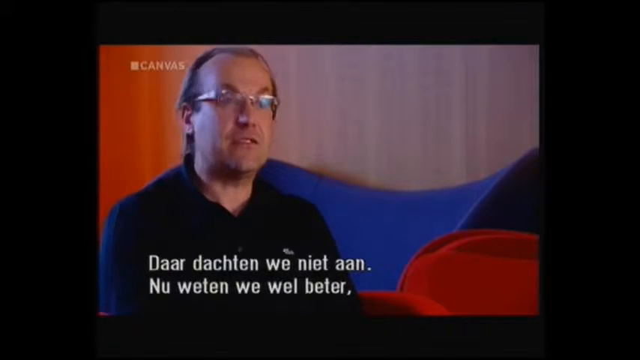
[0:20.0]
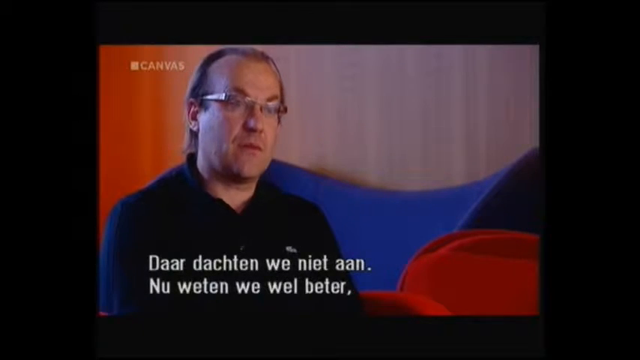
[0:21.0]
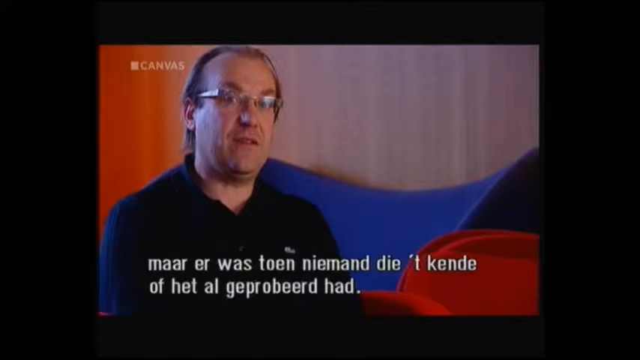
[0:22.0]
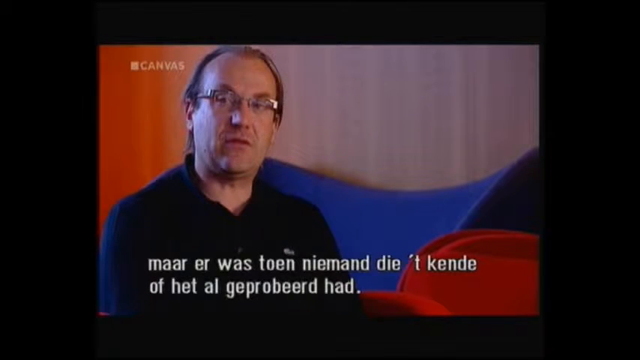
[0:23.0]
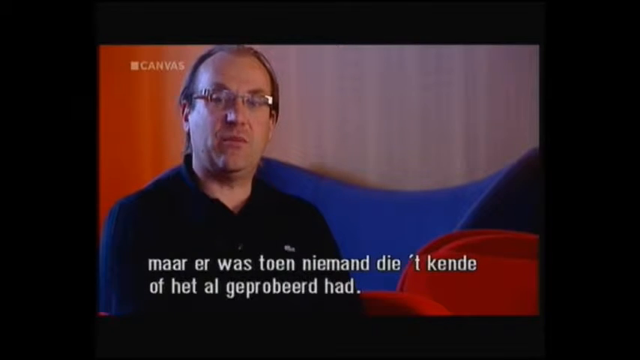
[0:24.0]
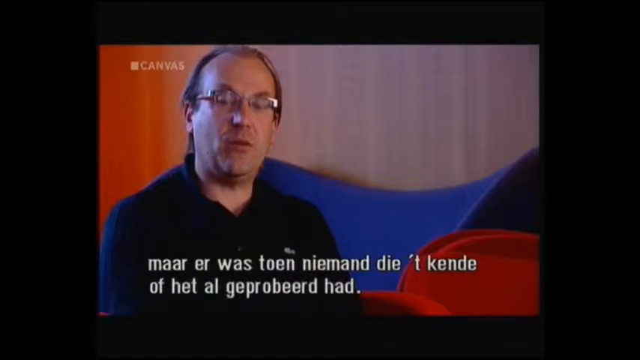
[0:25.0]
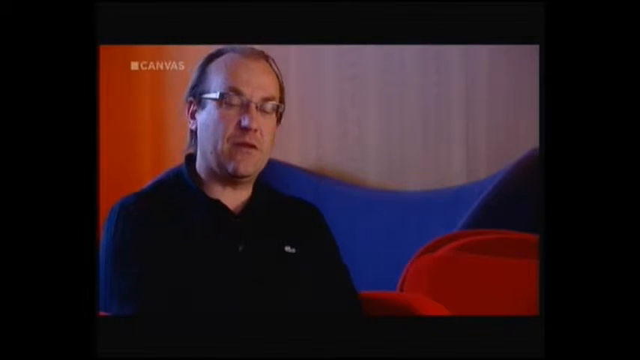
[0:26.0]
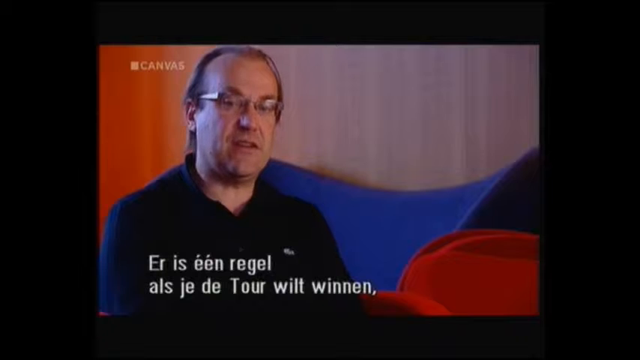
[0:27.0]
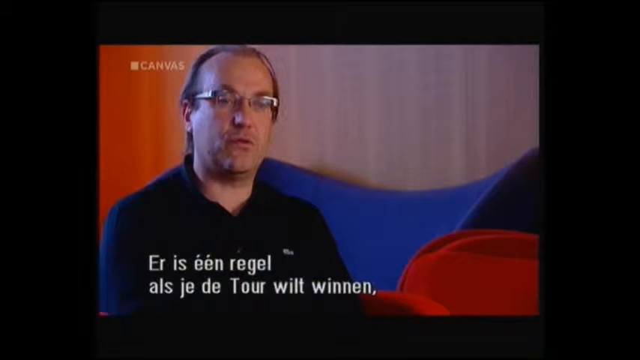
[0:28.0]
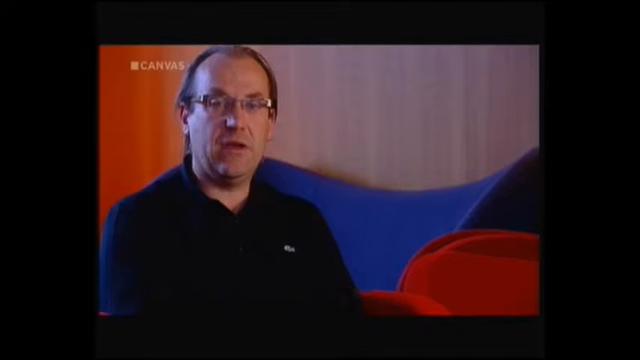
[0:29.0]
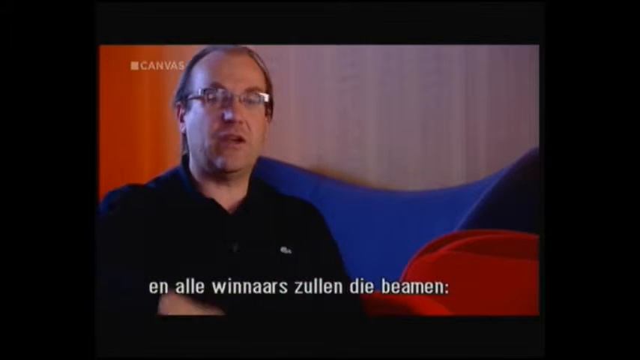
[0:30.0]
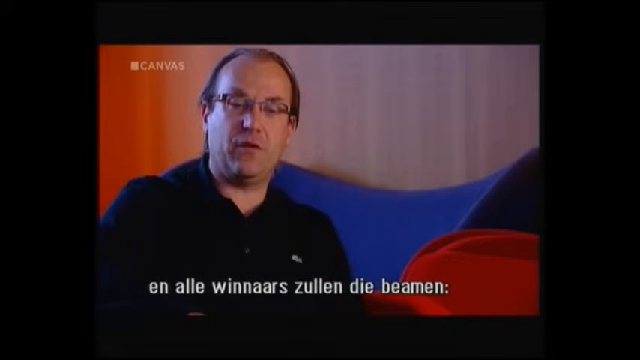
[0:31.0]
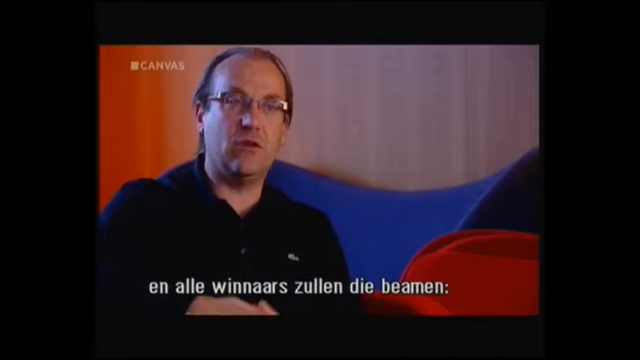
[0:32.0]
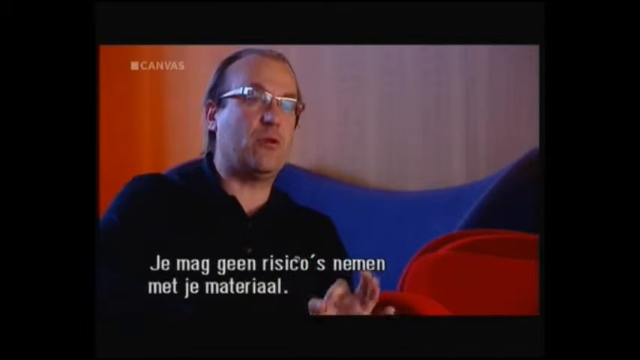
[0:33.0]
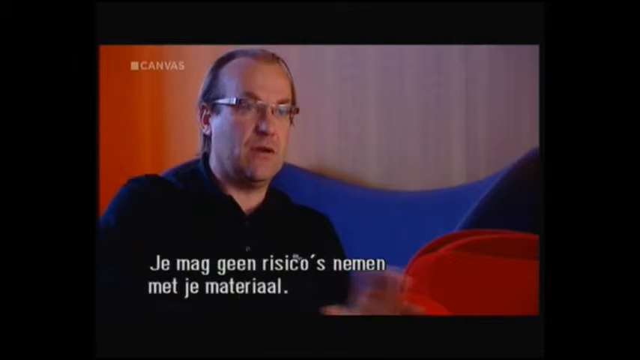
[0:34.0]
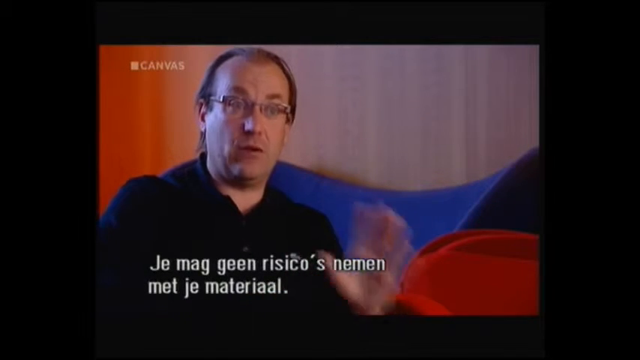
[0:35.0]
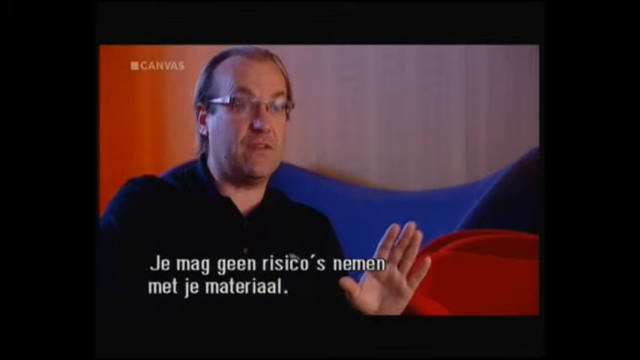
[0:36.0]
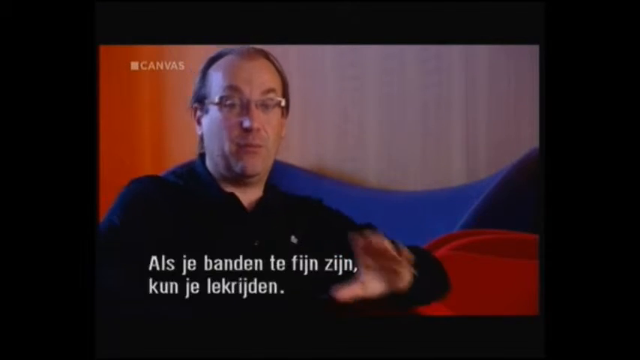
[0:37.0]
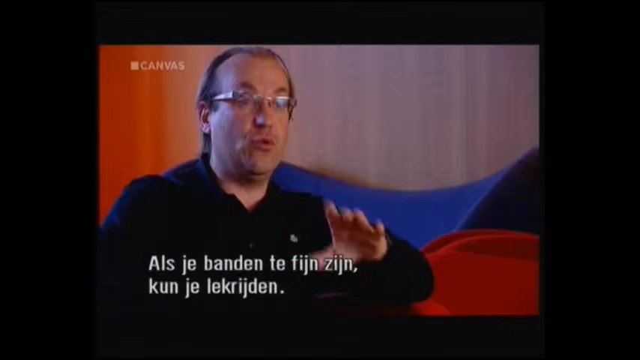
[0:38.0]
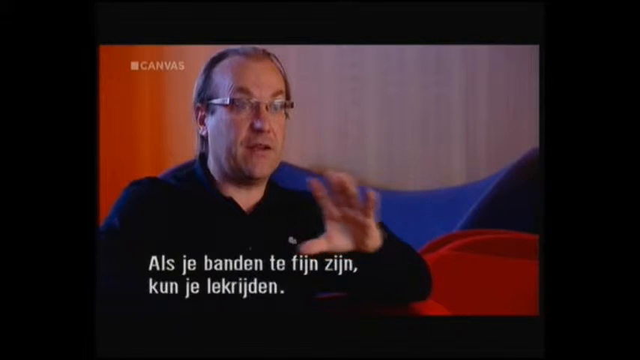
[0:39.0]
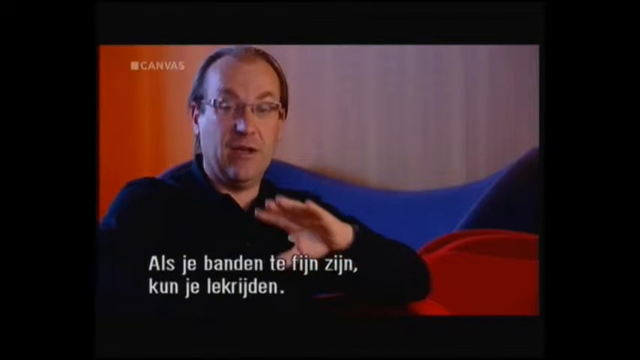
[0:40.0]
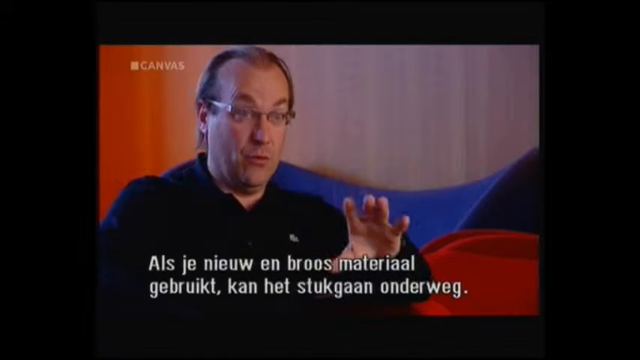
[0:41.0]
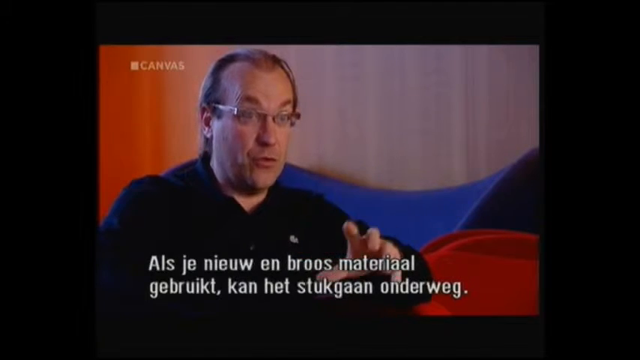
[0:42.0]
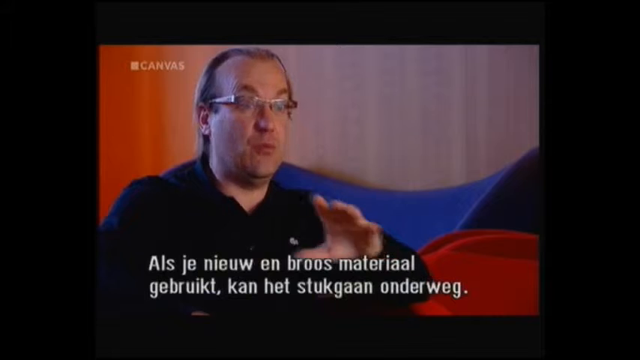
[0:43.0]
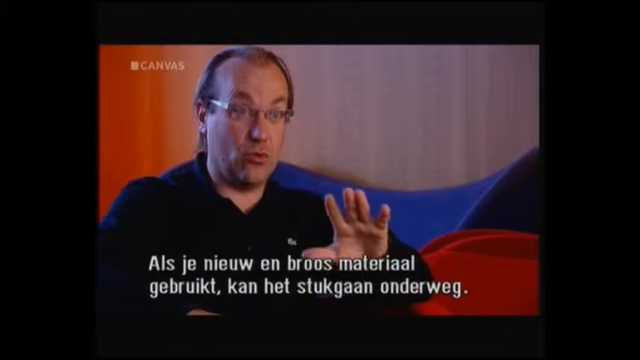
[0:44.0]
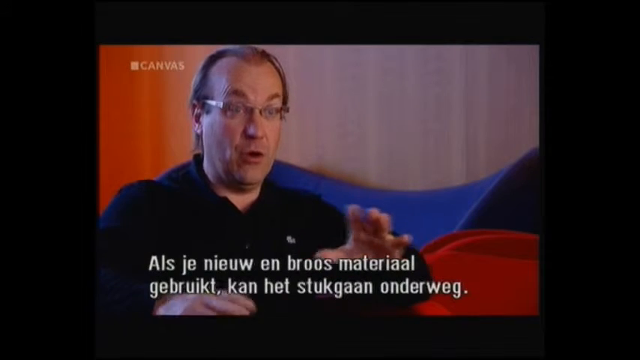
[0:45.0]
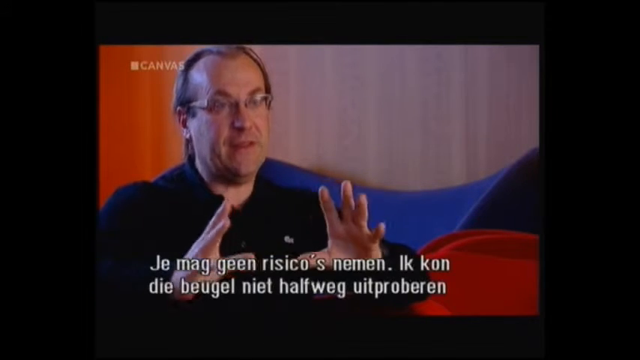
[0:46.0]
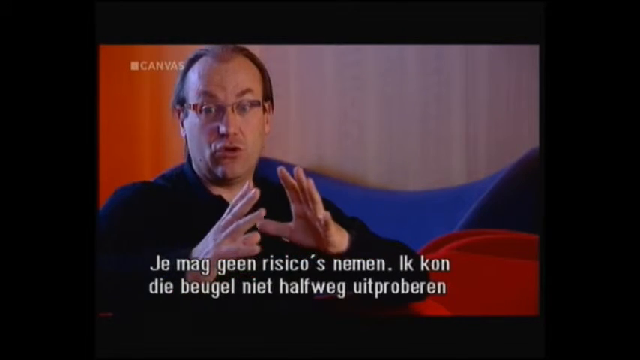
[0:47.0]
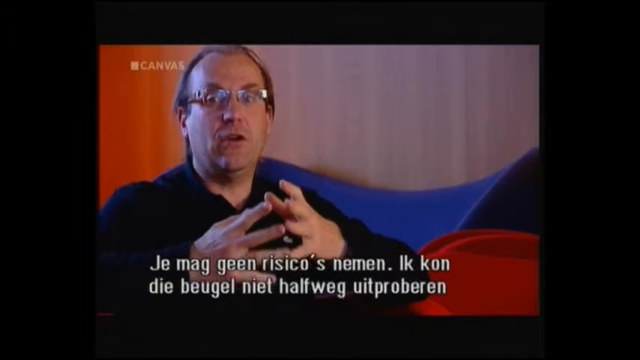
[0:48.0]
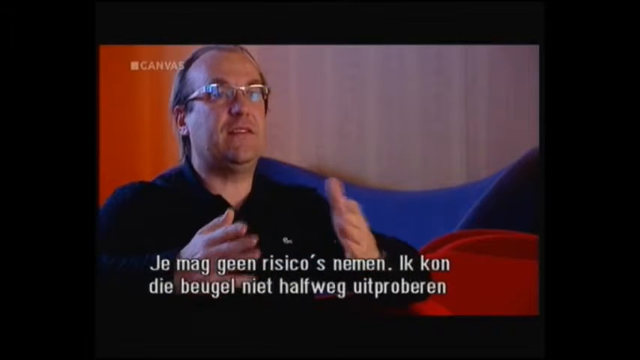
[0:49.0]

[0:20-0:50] The man continues to speak in an interview. He looks to be in his 40s, wears glasses, and has some frontal balding at the top of his head but long hair in the back, and he wears a black collared shirt. Behind him there seems to be some red and blue furniture, and non-English text appears at the bottom of the screen. As he speaks he moves his head around slightly, looks down to the right, and then looks back up at the interviewer. He raises his right hand slightly to express what he is talking about, then lifts his left hand slightly and puts it back down. He connects the pointer finger and thumb of his left hand to indicate something, then gestures with his palm facing down and to the side, moving his hand forward and back a few times. Finally he uses both hands, bringing the fingertips of his left and right hands close to each other, with his fingers straight out and his palms facing each other.